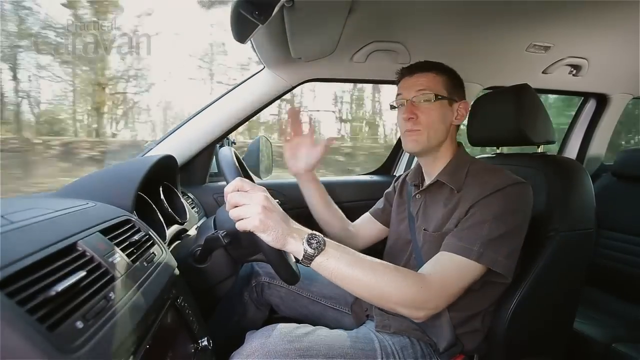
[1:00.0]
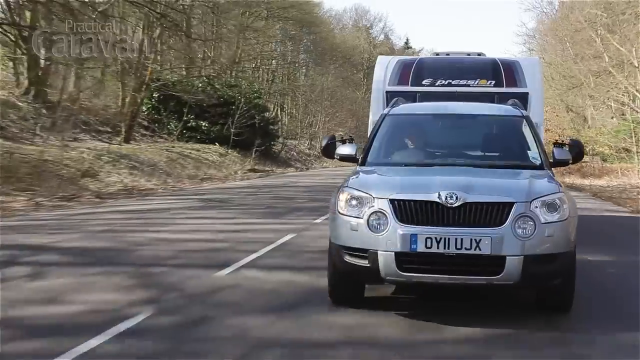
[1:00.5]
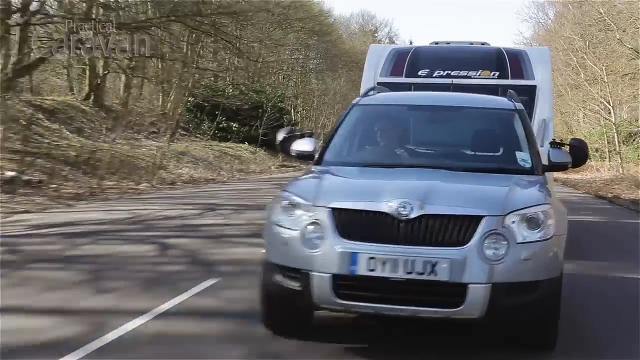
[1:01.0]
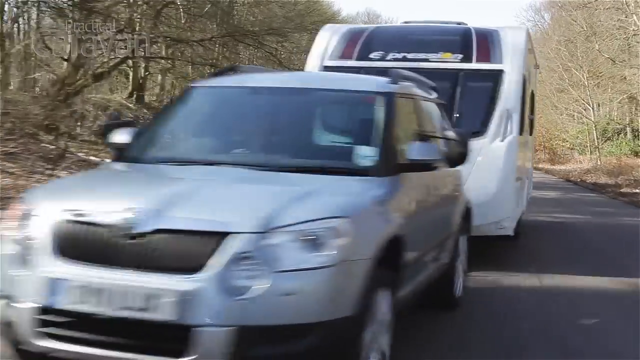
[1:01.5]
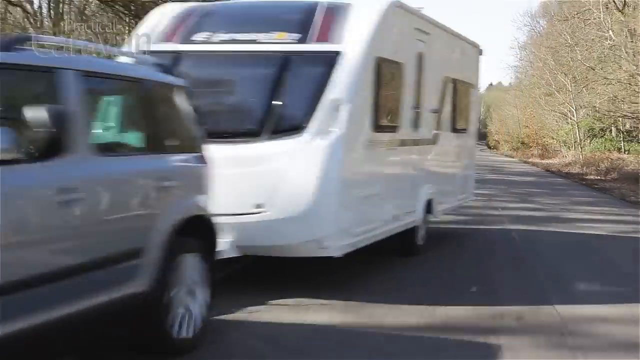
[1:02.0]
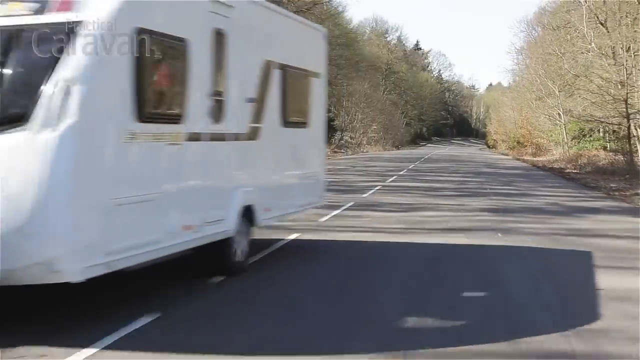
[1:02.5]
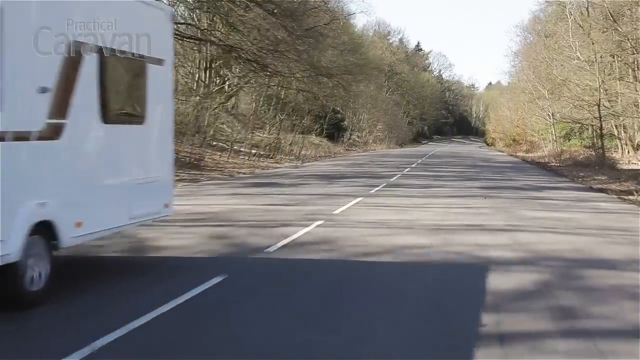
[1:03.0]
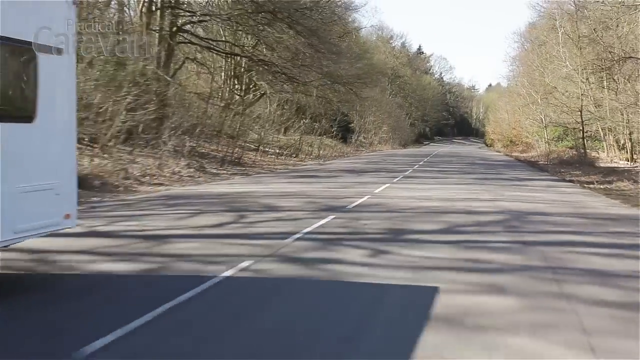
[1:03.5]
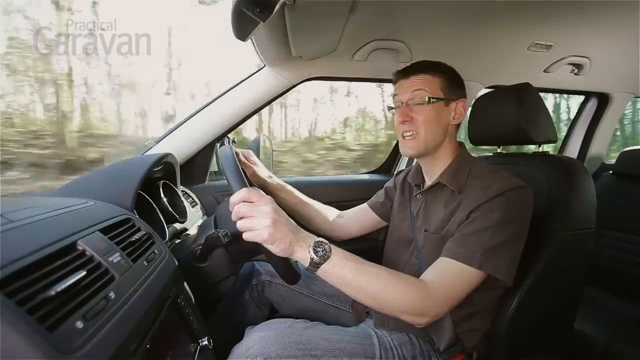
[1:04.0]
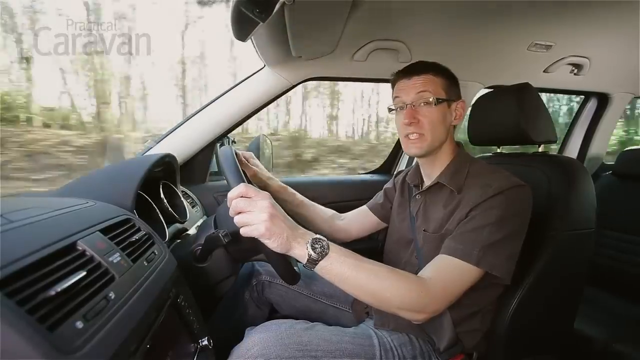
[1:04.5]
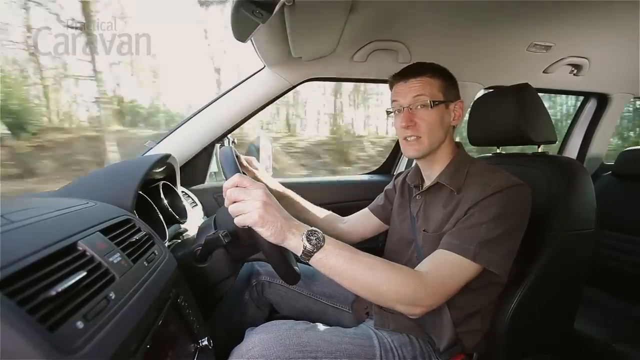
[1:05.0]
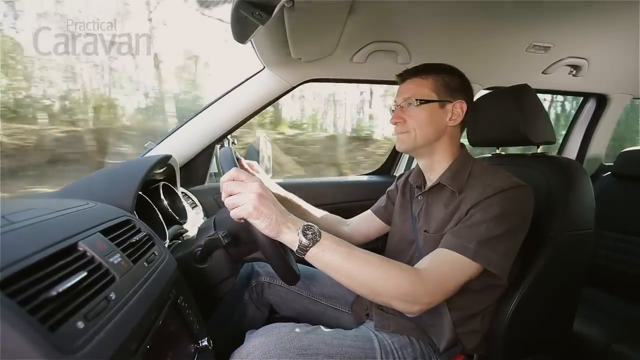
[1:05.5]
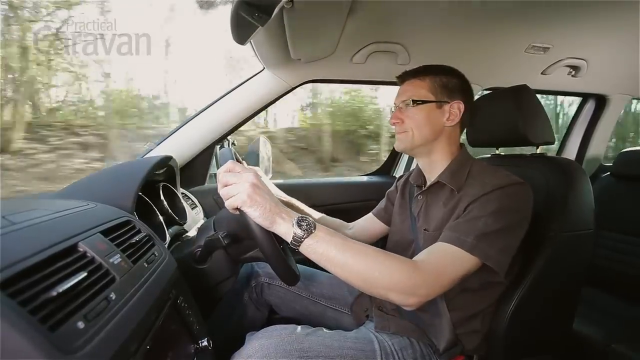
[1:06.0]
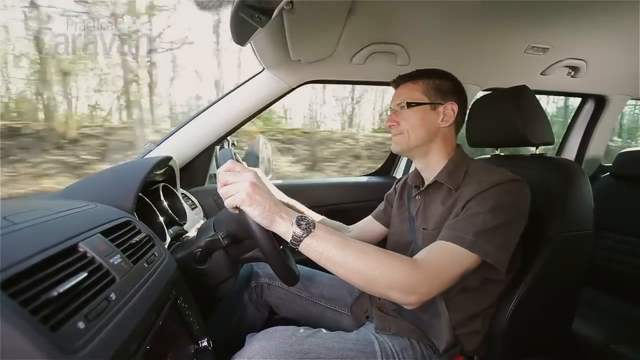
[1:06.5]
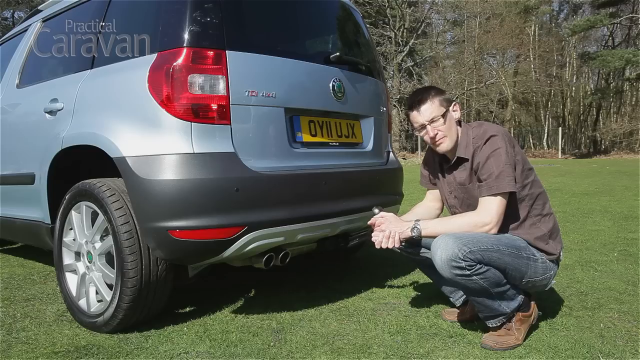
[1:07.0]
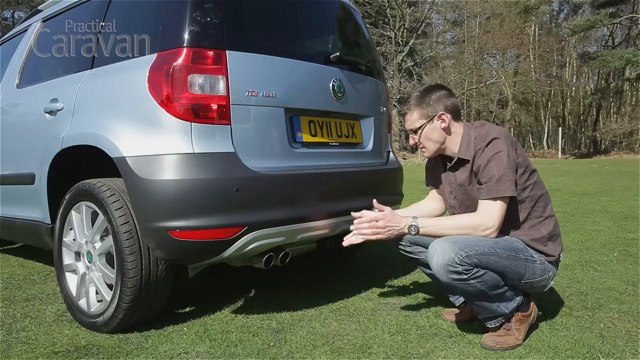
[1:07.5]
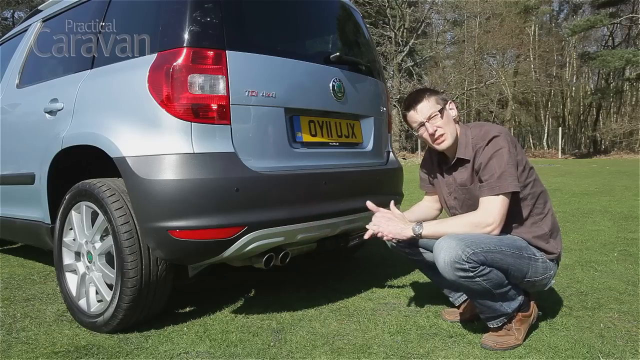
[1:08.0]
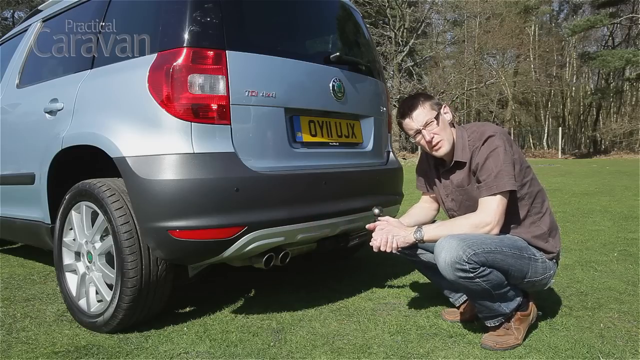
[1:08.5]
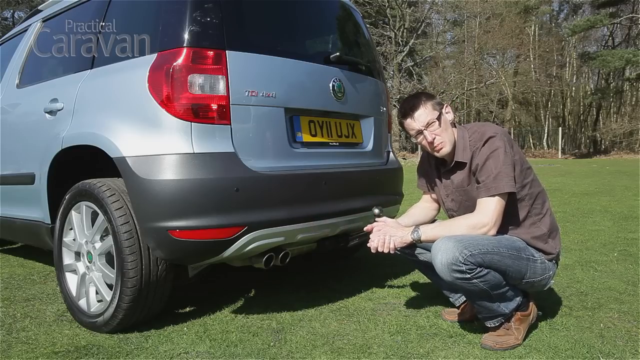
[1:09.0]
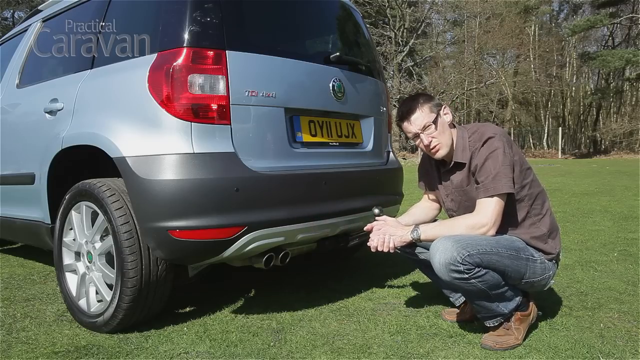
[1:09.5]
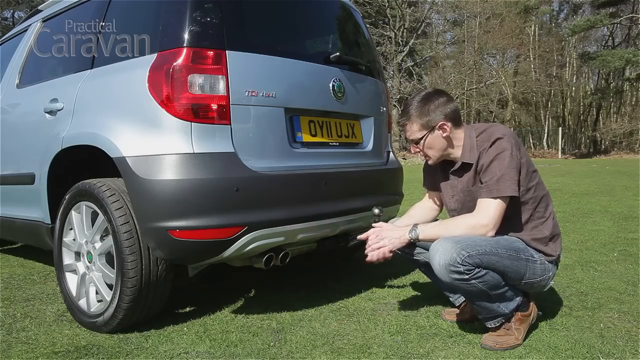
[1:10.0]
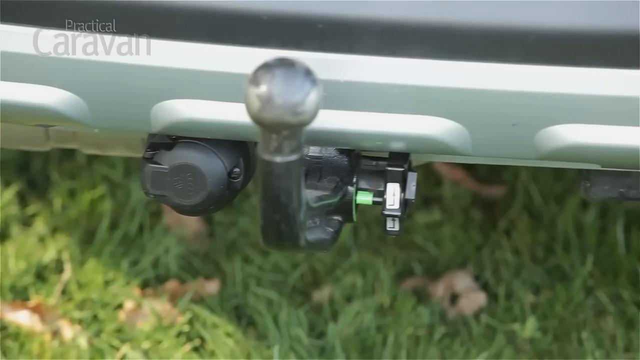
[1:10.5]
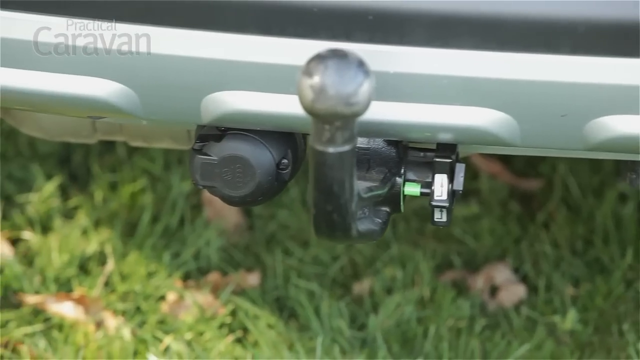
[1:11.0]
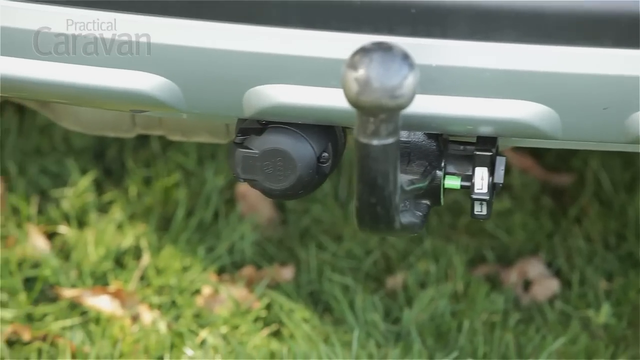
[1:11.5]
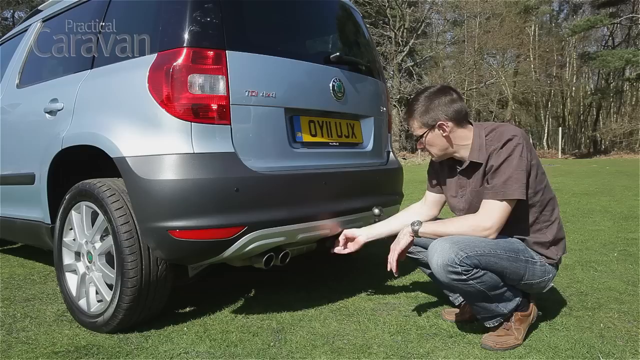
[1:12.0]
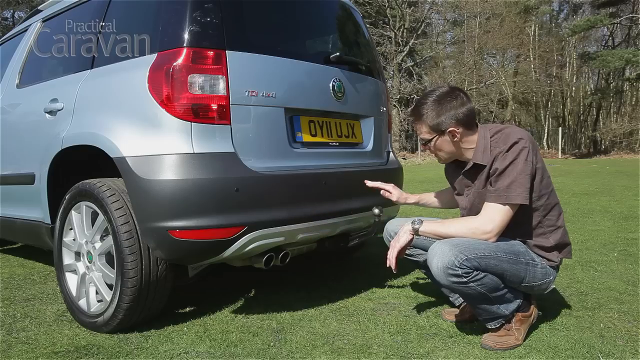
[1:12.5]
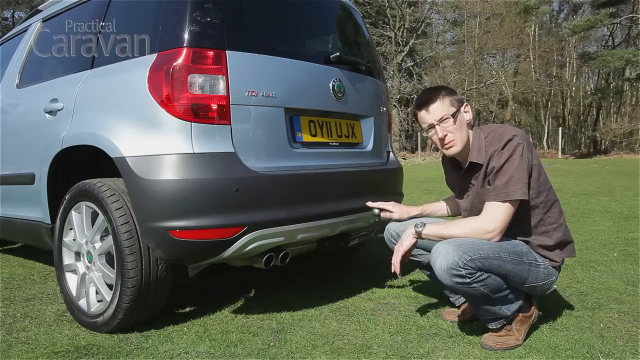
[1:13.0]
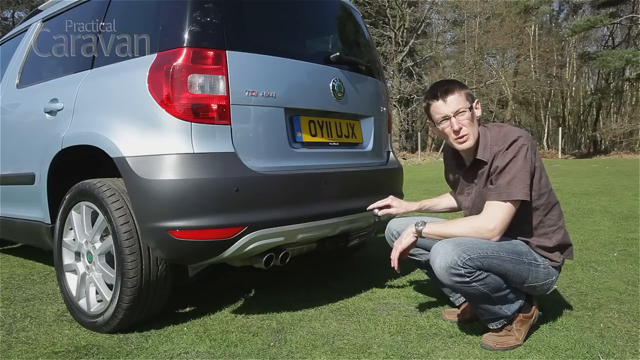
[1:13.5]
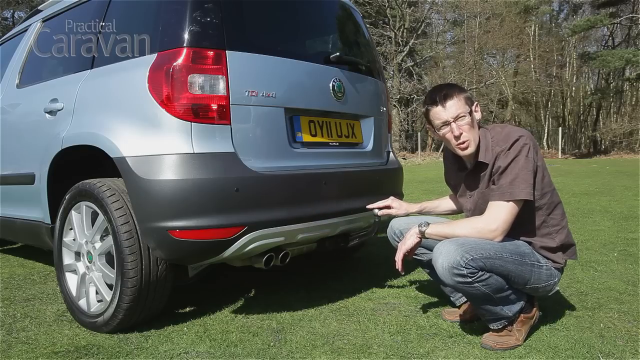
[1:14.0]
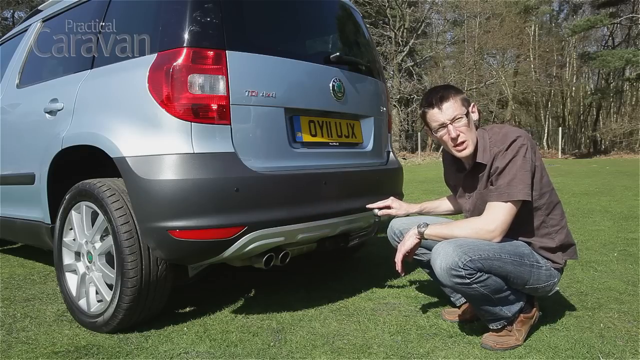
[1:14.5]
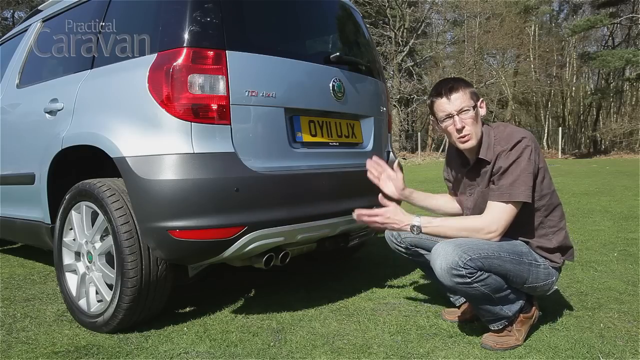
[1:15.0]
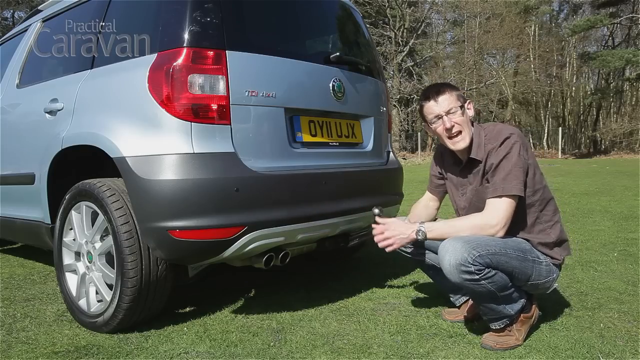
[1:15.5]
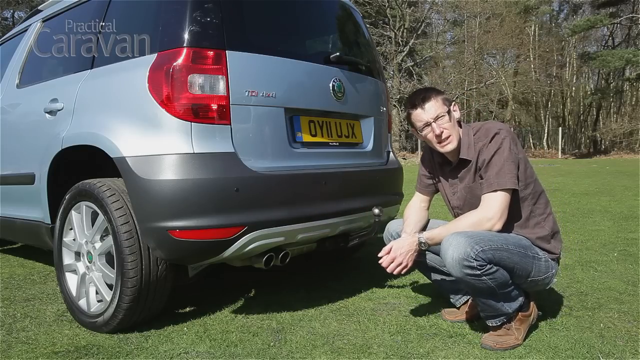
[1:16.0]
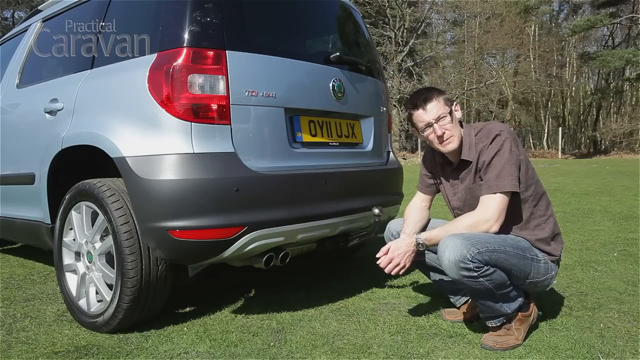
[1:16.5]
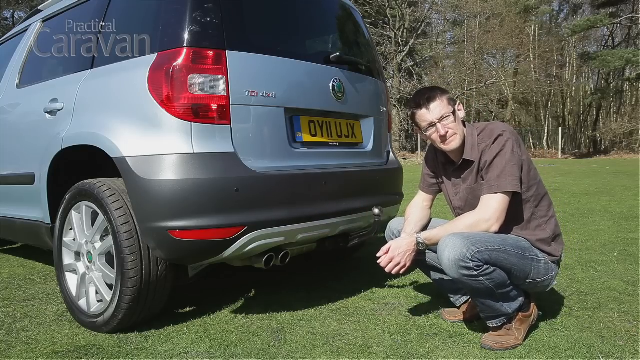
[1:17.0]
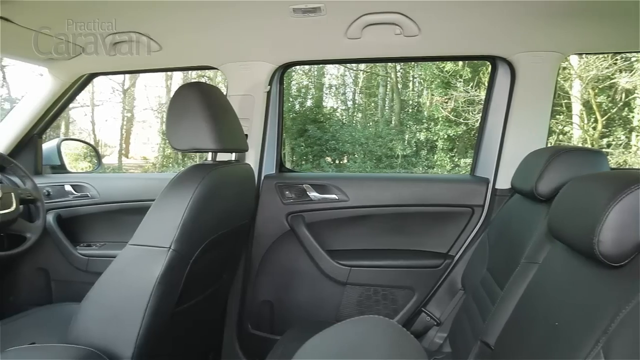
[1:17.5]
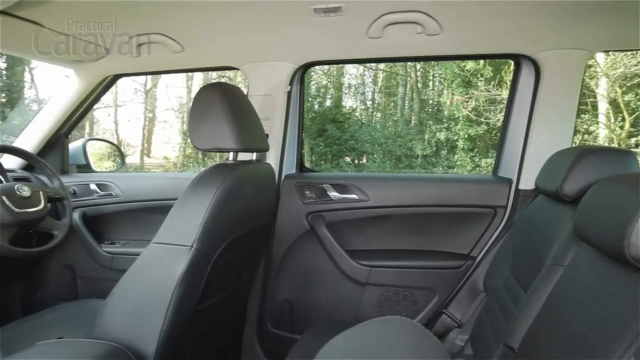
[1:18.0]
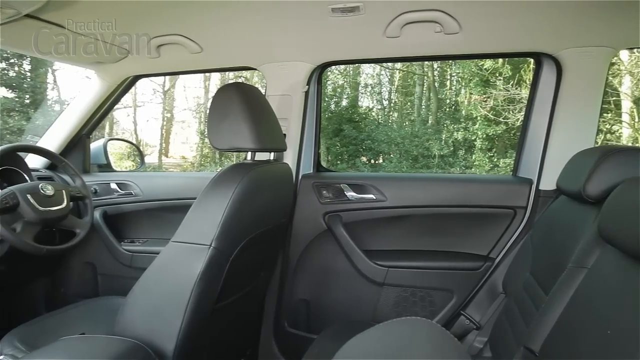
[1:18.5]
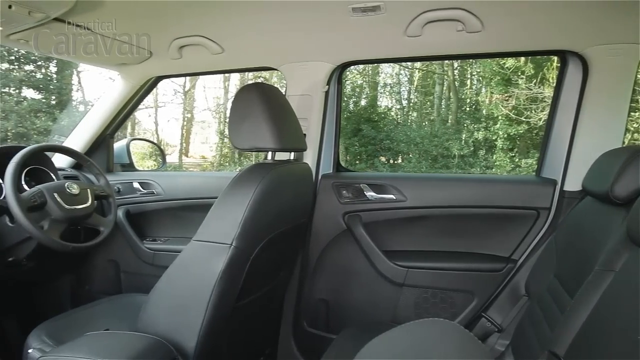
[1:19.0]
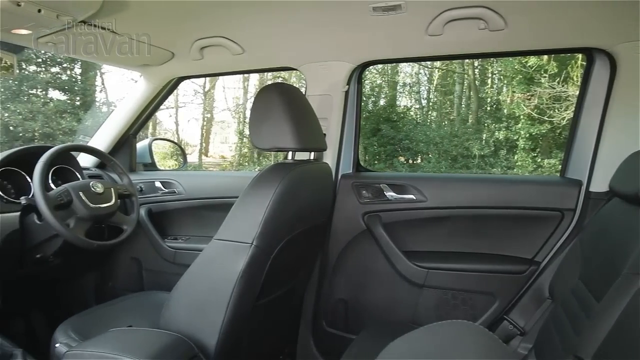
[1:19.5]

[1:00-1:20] The man drives the car, whose steering wheel is on the right side. The view then shows the front of the car pulling the white trailer on a road cut through a forest, with trees on either side, in daytime. It cuts back to the man, his hands calmly on the steering wheel, and he looks over toward the viewer for a second. Then he is squatting at the back of the car near the tailpipes, hands clasped together, looking toward the camera and talking, apparently about the exhausts or tailpipes. The camera zooms in on the rear end of the car. He puts his hand on the metal bottom back part of the car and continues talking. Then there is a view inside the car showing black seats and a black interior, though the roof inside is white.